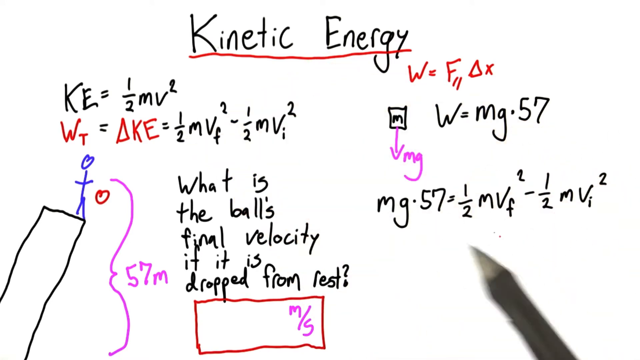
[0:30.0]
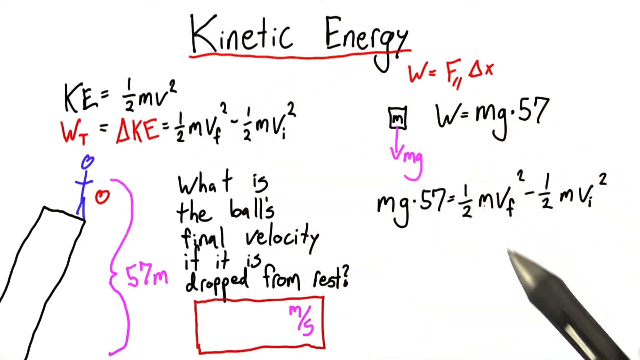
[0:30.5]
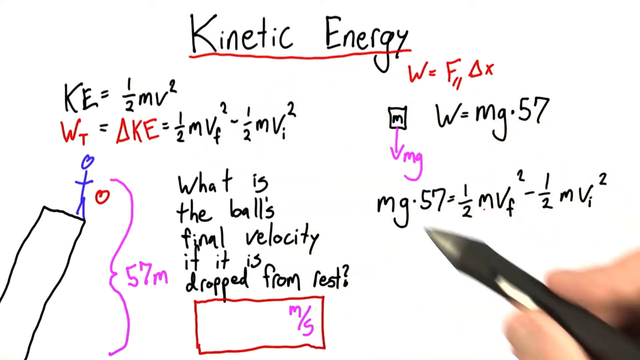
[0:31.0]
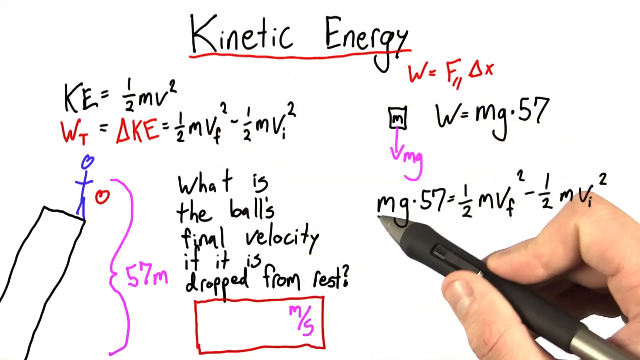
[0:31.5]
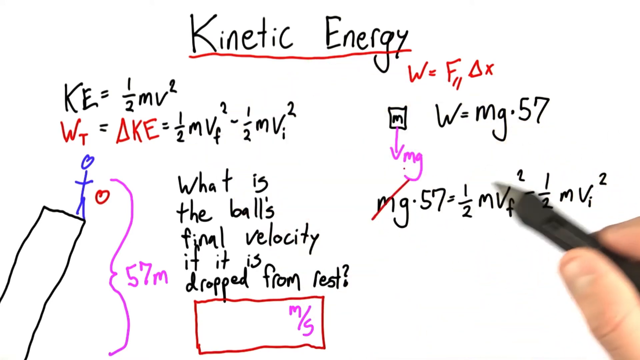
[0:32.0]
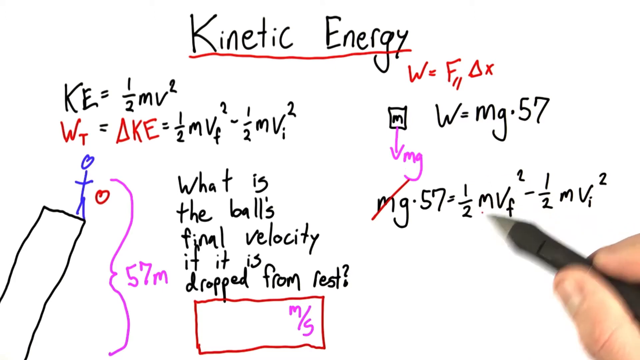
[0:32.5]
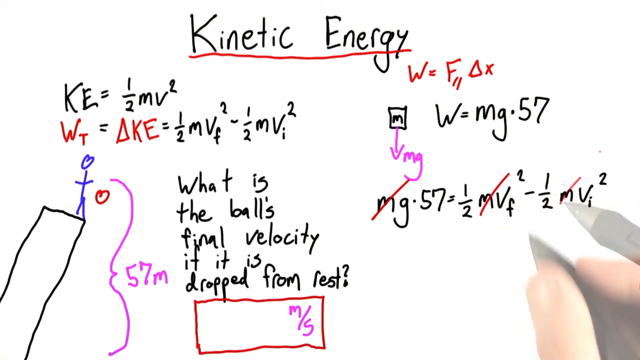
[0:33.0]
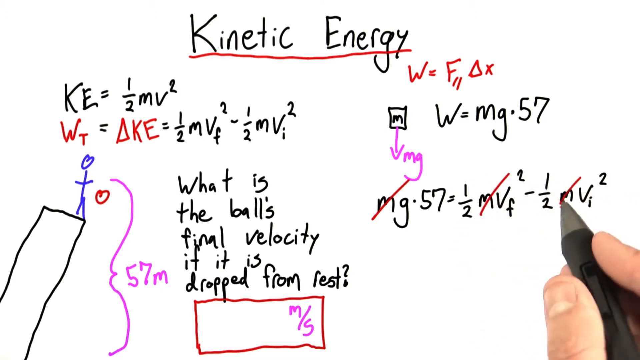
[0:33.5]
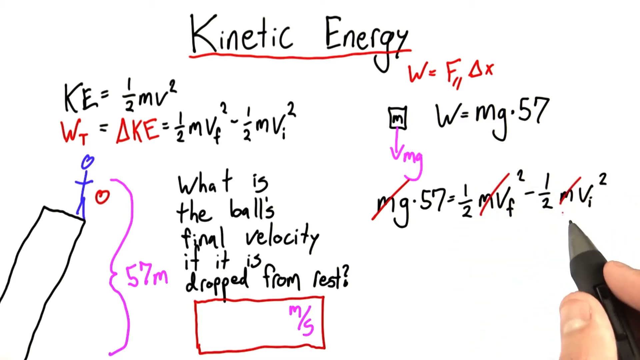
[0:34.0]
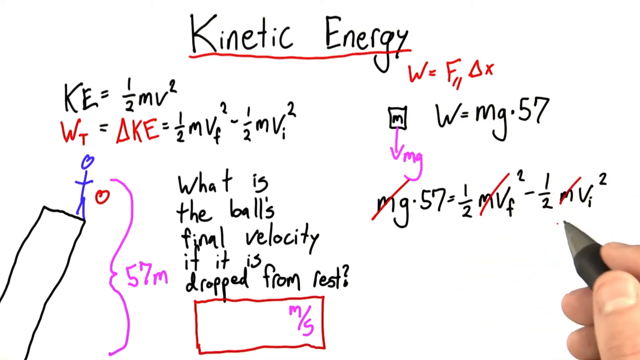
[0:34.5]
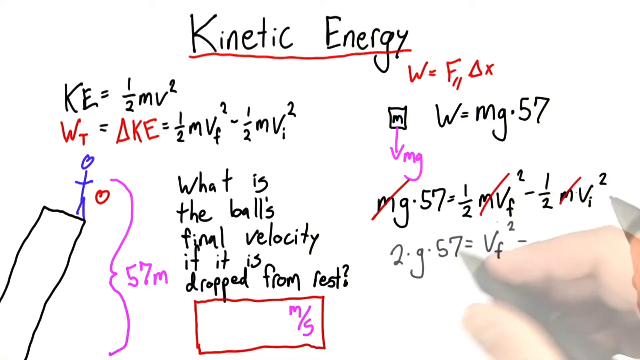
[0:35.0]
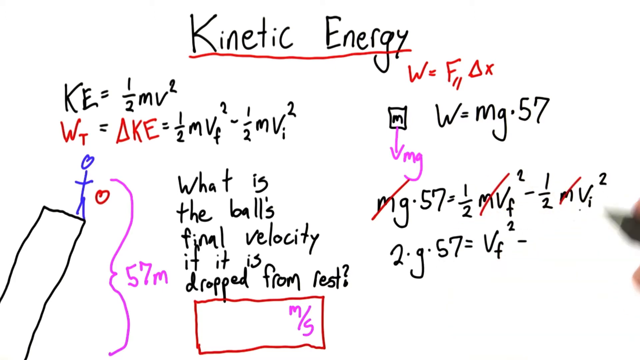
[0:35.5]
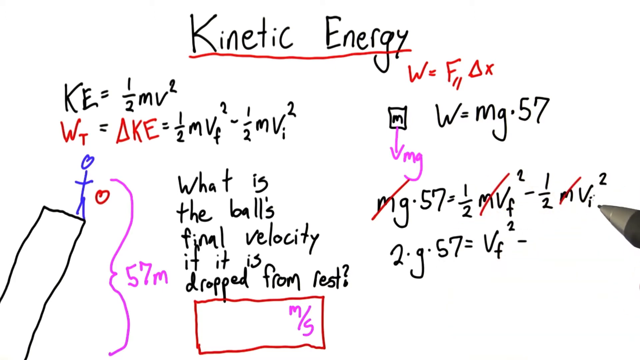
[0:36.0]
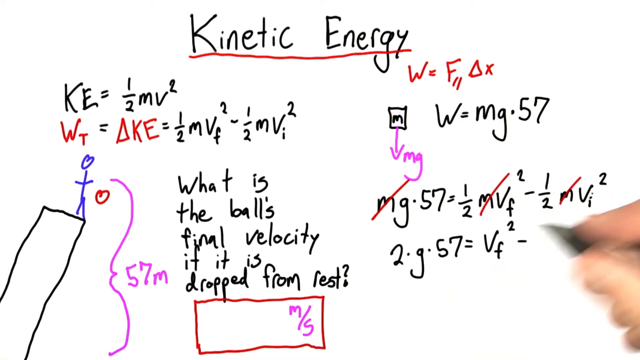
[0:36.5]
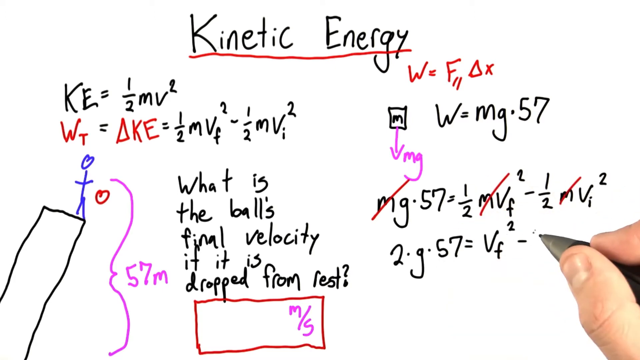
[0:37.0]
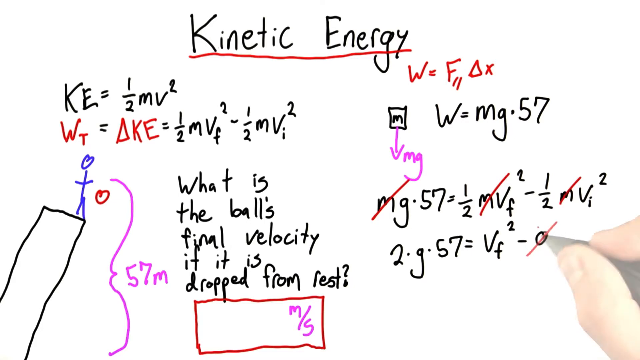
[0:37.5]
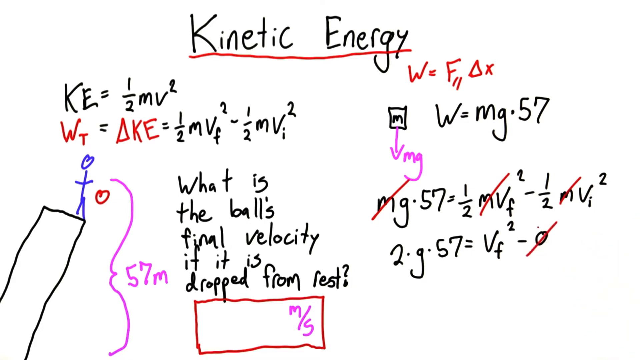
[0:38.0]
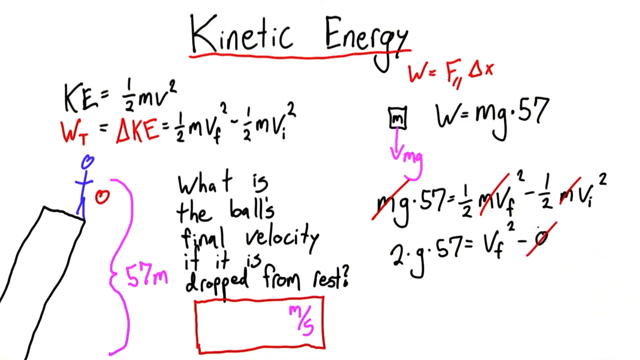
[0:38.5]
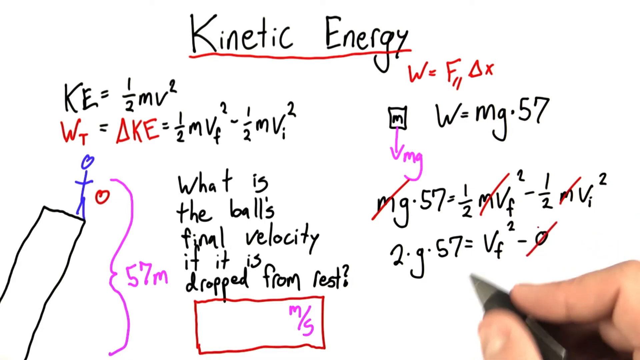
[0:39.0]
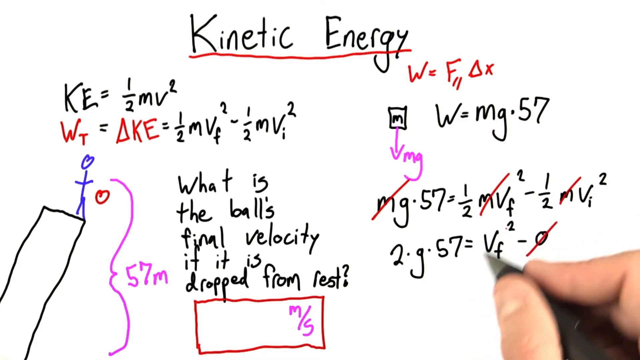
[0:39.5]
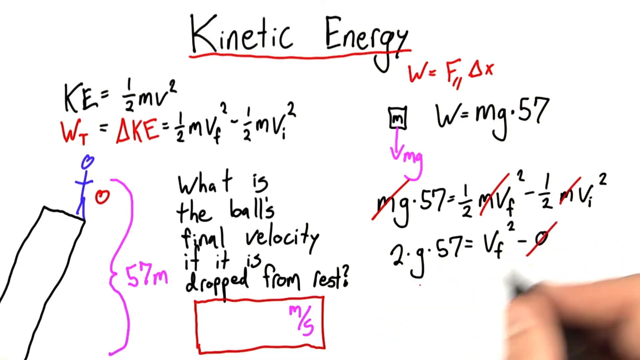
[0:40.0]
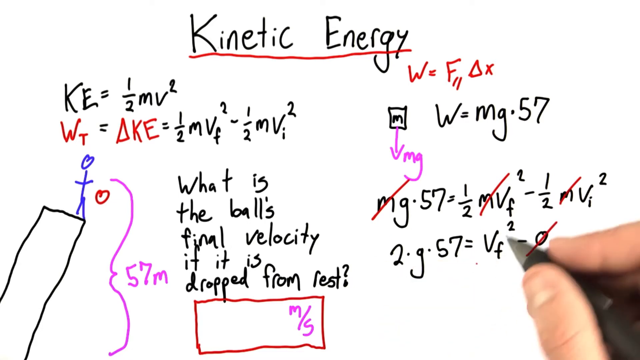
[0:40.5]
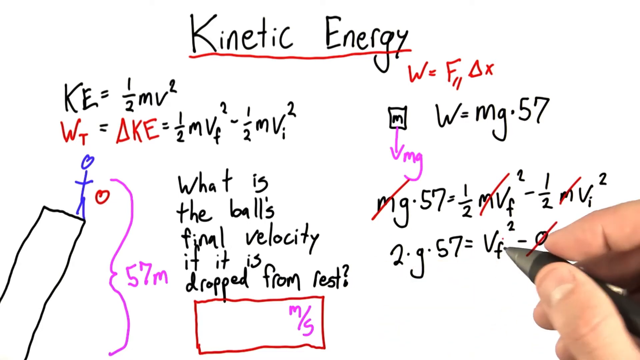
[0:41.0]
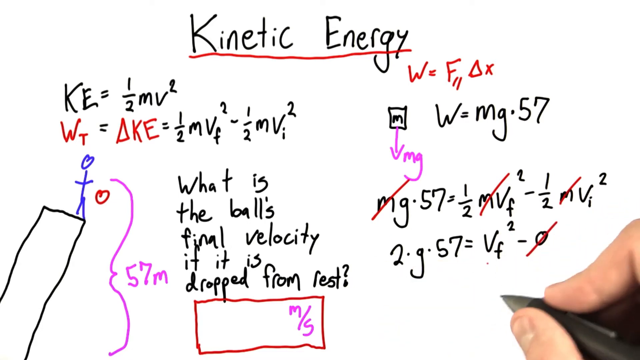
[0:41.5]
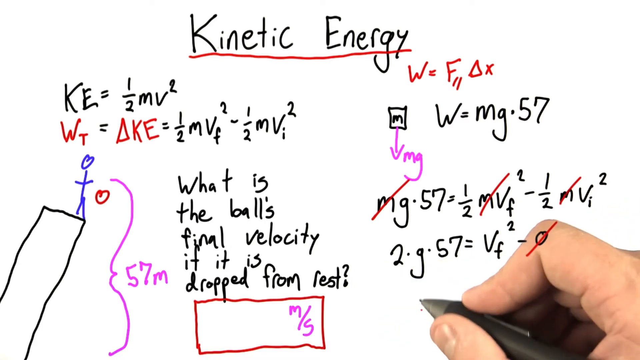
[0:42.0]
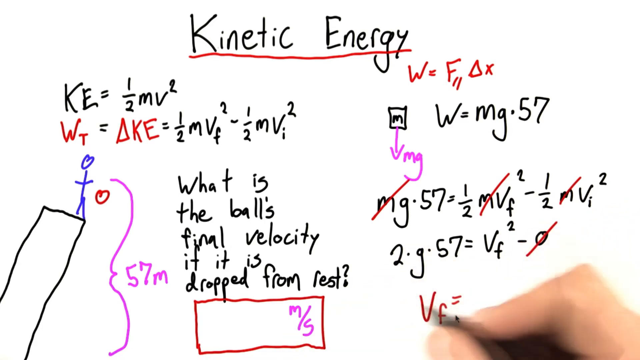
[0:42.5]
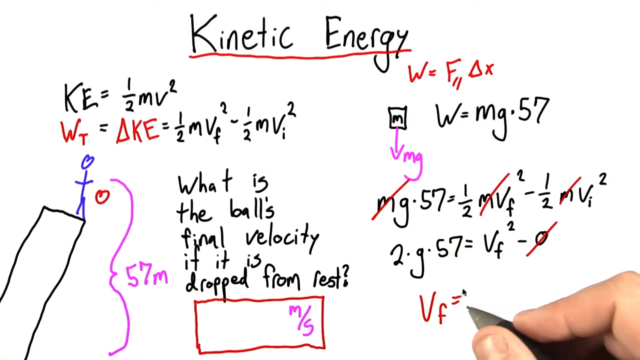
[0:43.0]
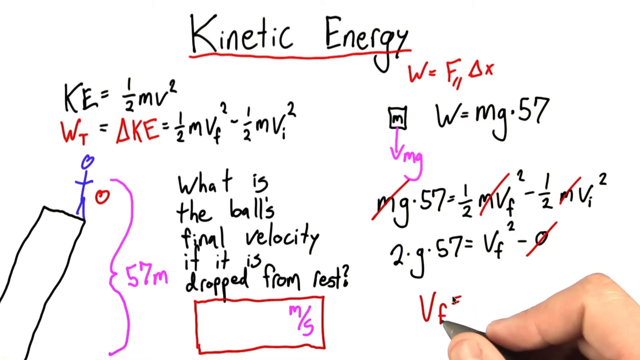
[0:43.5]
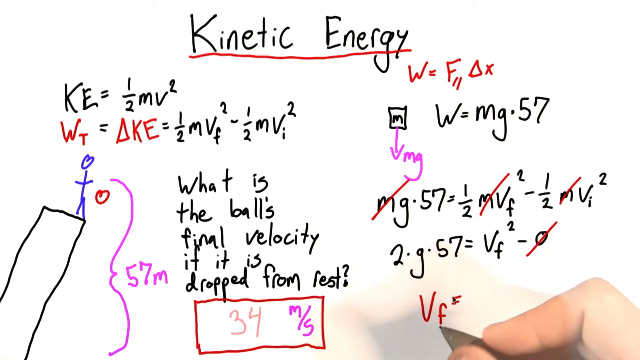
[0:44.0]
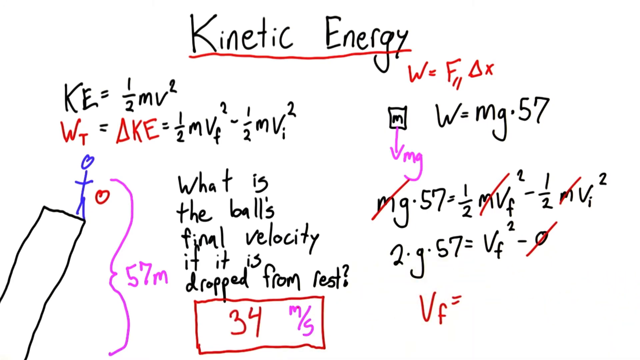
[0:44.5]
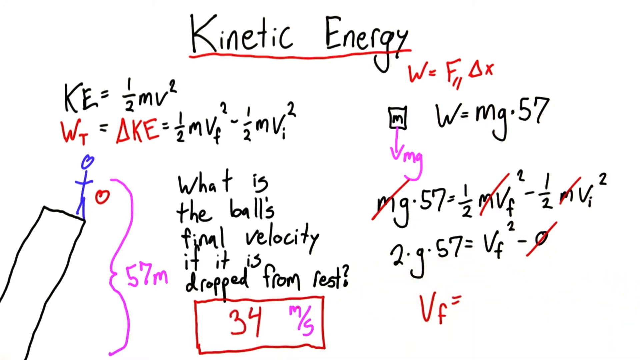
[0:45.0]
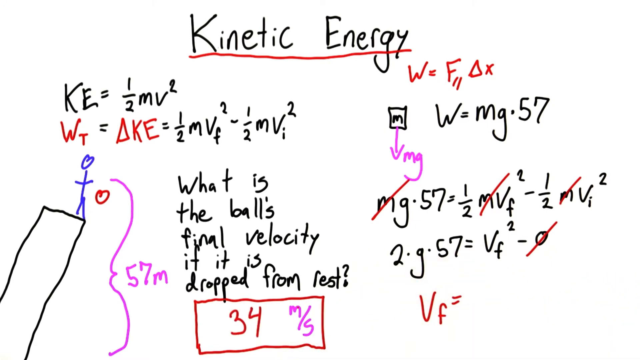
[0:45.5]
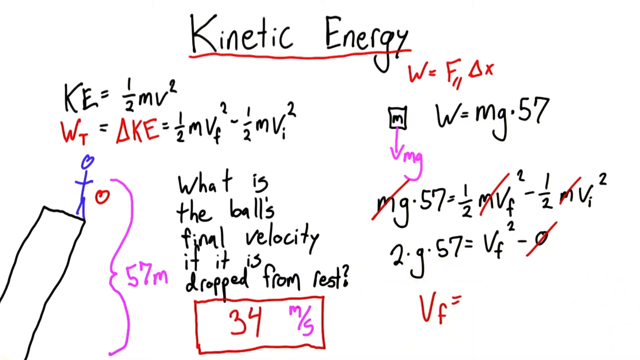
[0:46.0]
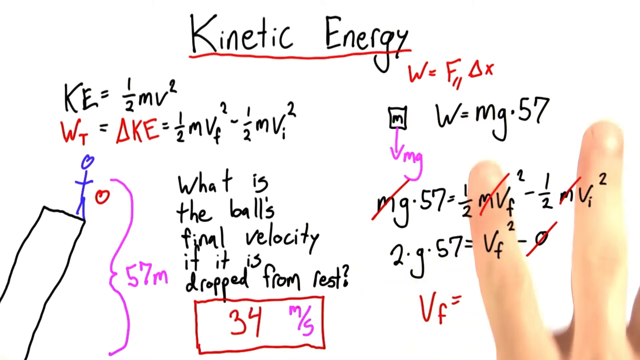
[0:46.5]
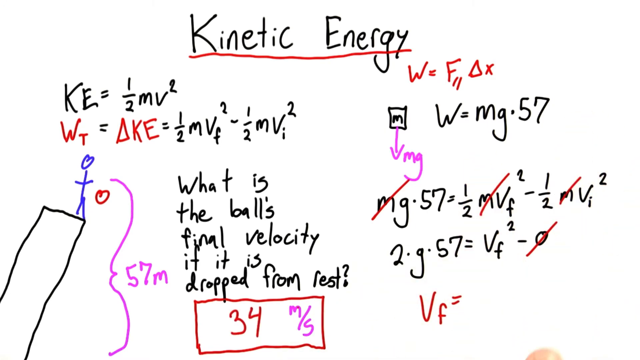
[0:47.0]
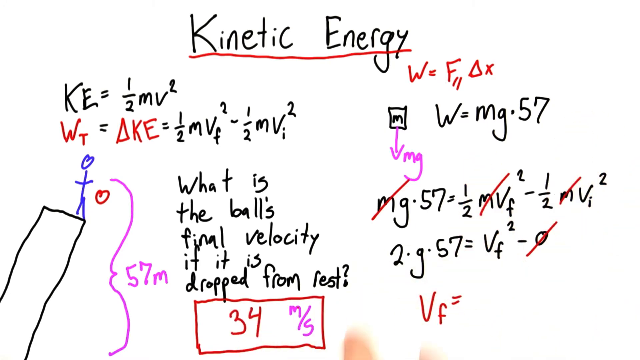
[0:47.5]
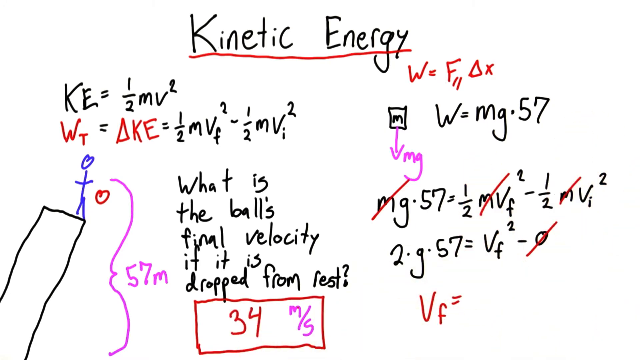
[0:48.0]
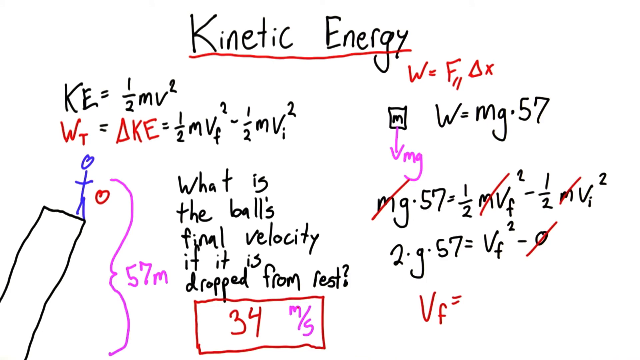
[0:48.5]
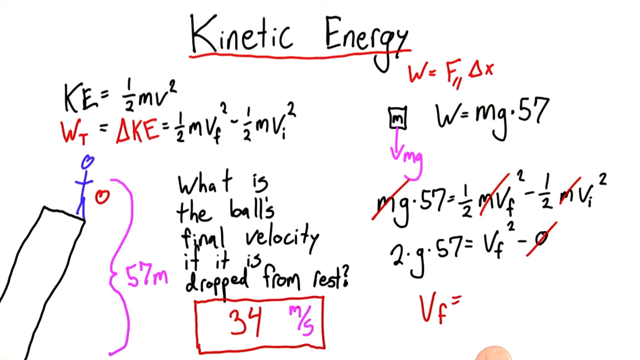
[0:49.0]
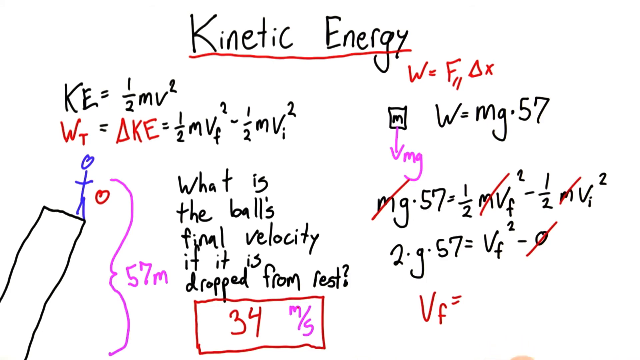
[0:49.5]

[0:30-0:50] The pen draws red slashes through some of the letters already on the screen, specifically the m's in the long equation in the lower right that starts with "mg" and has an equal sign in the middle. It crosses out the m's on both sides of the equation, simplifying it to "2 · g · 57 =", with the dots apparently being multiplication symbols, followed by "= Vf" with the f as a subscript. At the end, in red, is "Vf =", again with a subscript f. The equation is never finished, and it does not yet show what Vf equals. The pen apparently has been dropped off screen, and a hand appears in the lower right corner, waving its four fingers; maybe the thumb is waving as well, but it is cut off at the bottom of the image.